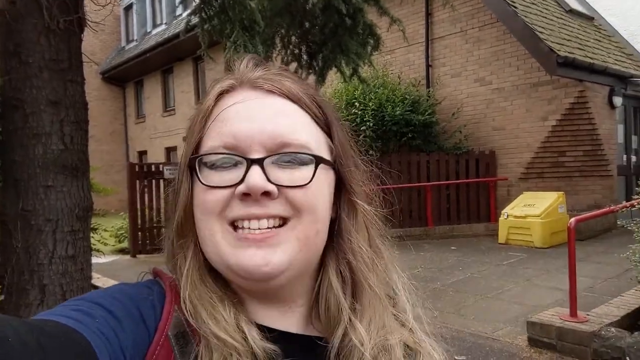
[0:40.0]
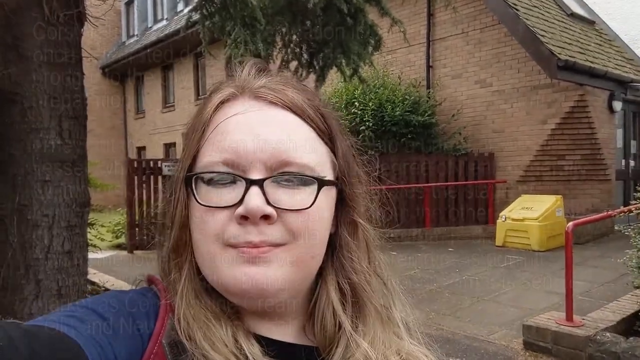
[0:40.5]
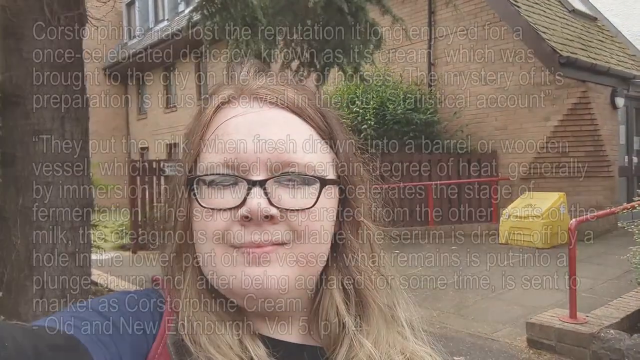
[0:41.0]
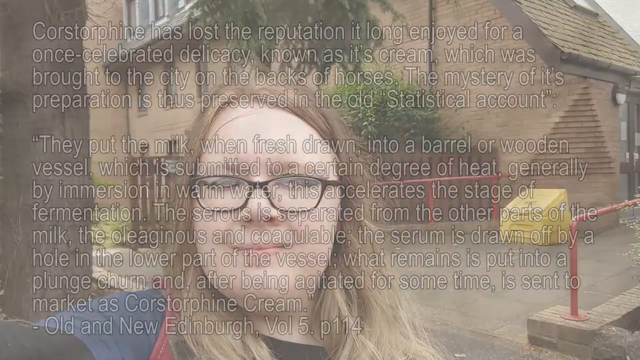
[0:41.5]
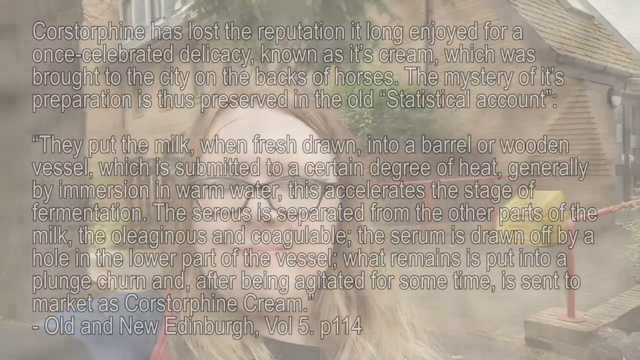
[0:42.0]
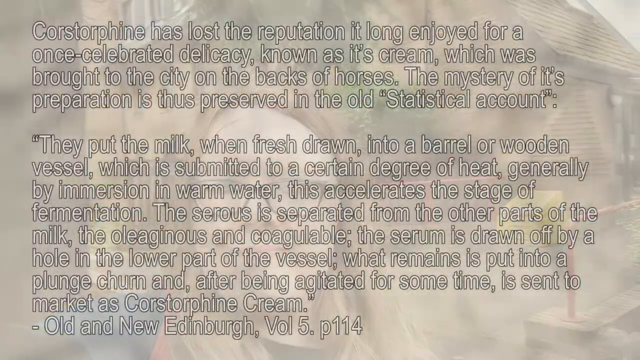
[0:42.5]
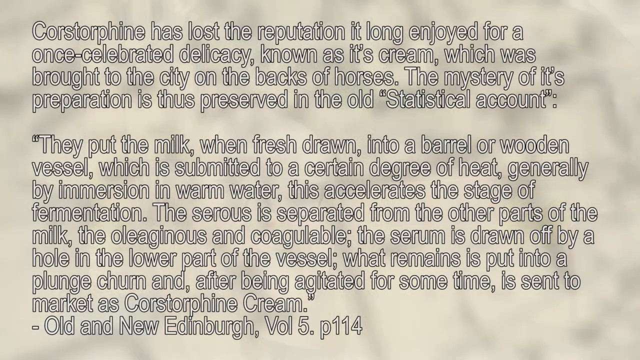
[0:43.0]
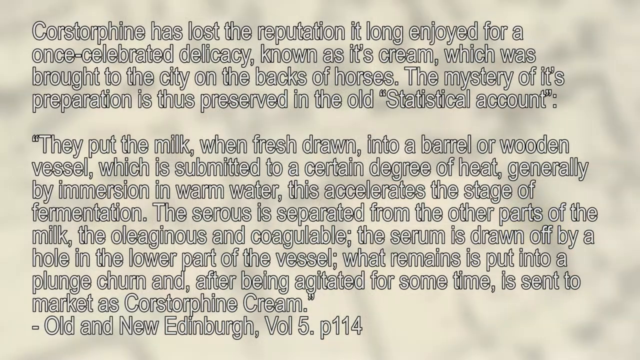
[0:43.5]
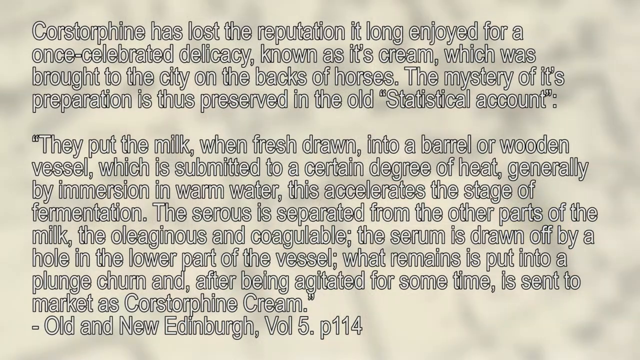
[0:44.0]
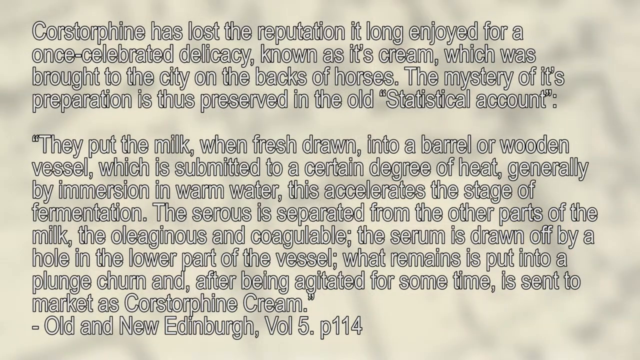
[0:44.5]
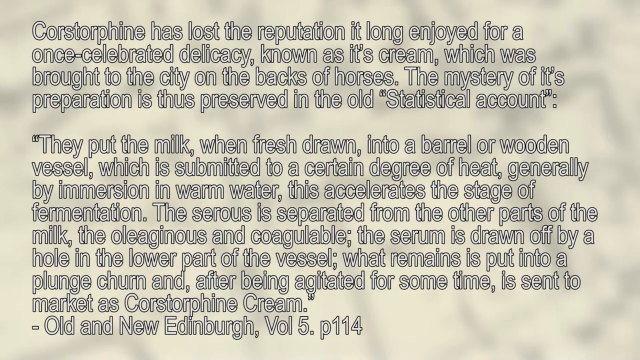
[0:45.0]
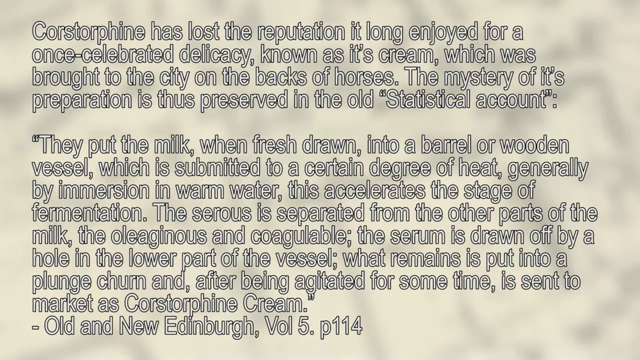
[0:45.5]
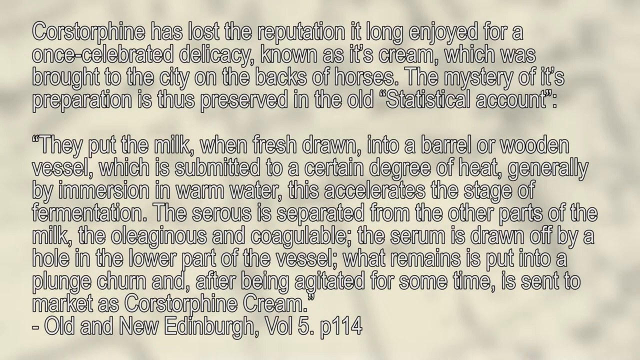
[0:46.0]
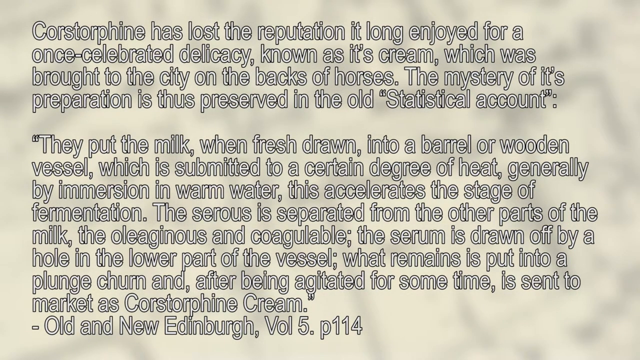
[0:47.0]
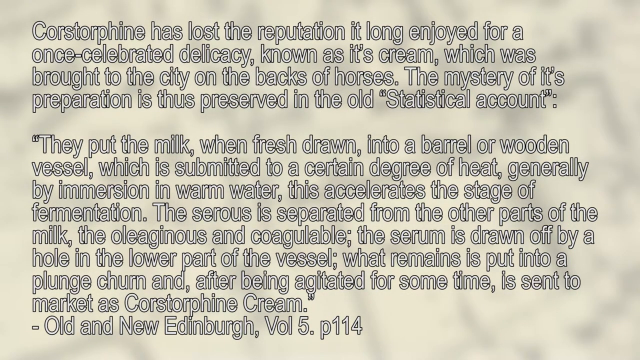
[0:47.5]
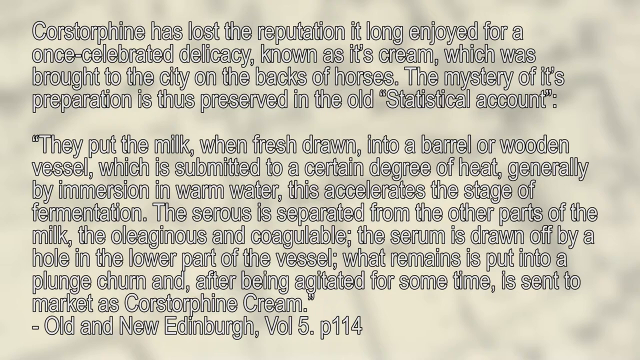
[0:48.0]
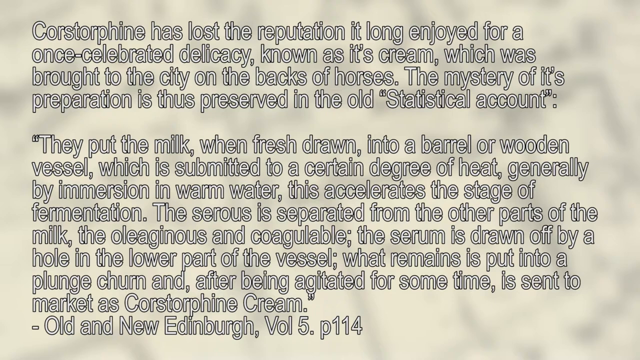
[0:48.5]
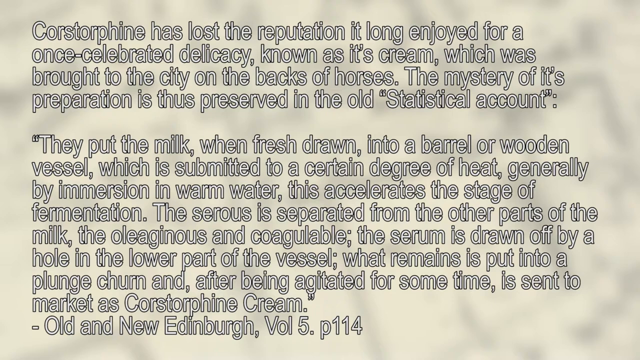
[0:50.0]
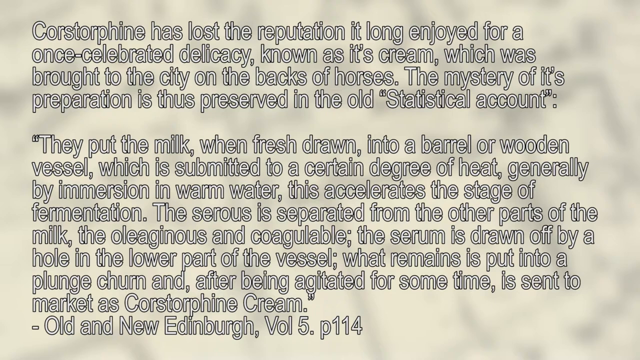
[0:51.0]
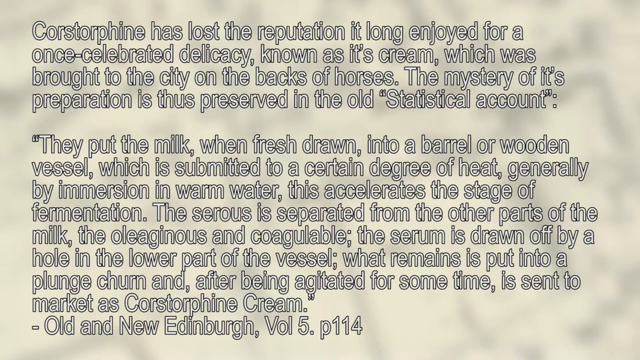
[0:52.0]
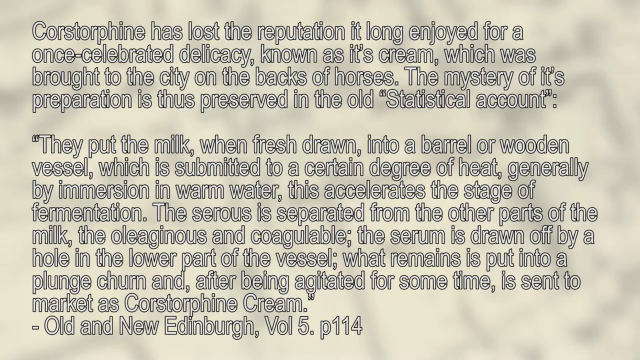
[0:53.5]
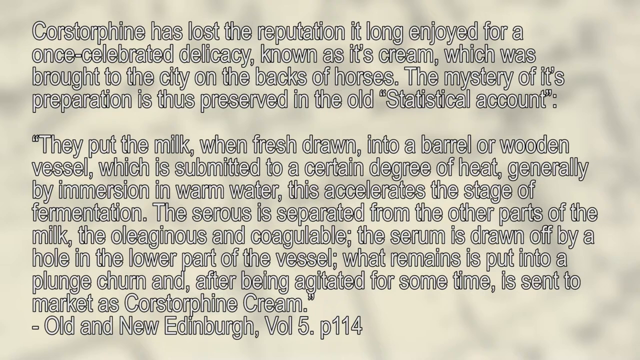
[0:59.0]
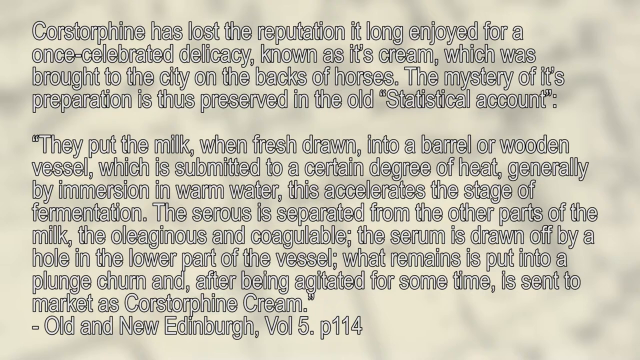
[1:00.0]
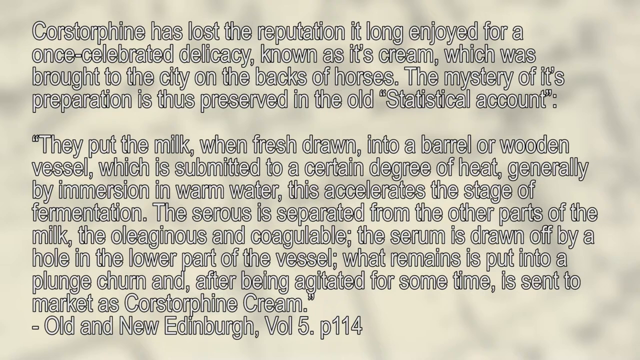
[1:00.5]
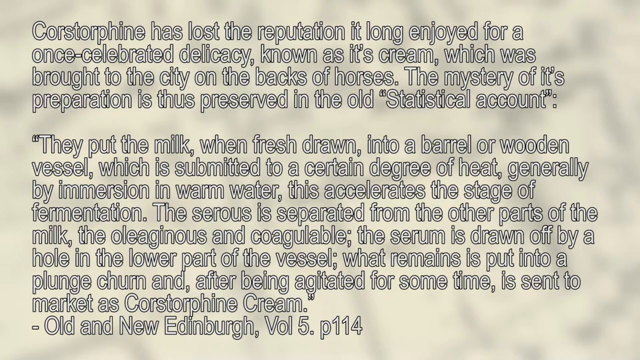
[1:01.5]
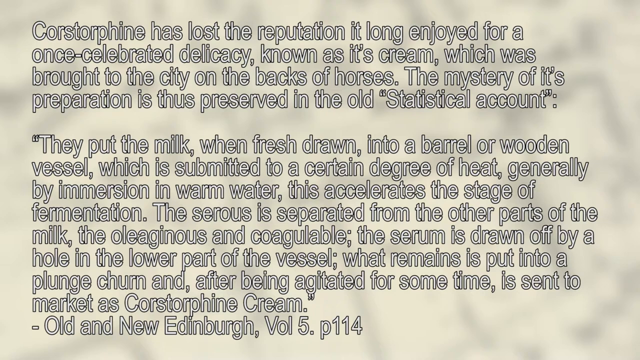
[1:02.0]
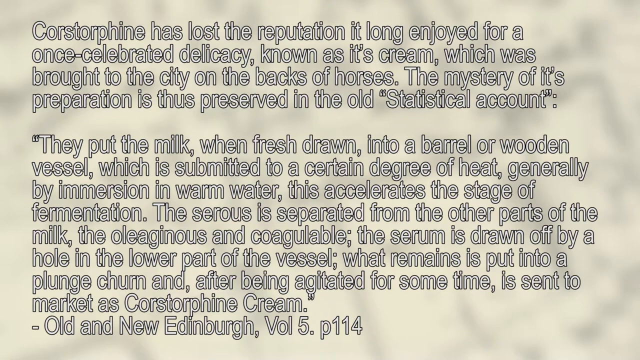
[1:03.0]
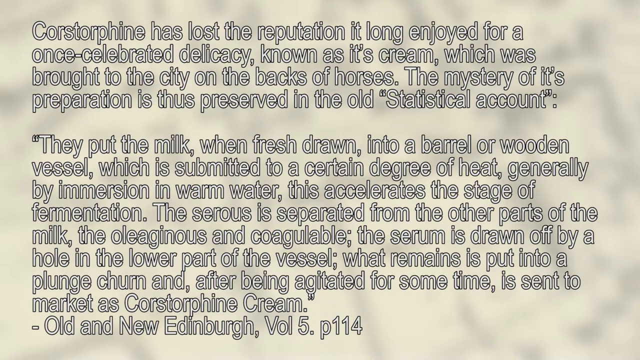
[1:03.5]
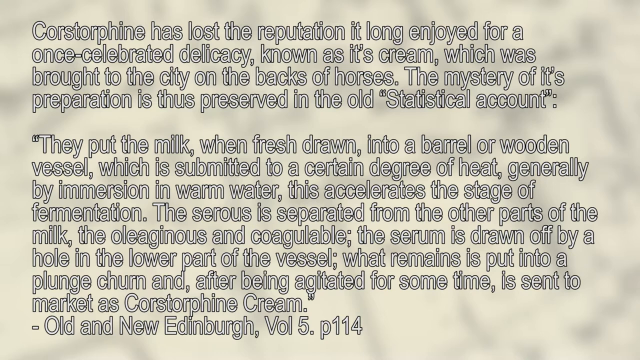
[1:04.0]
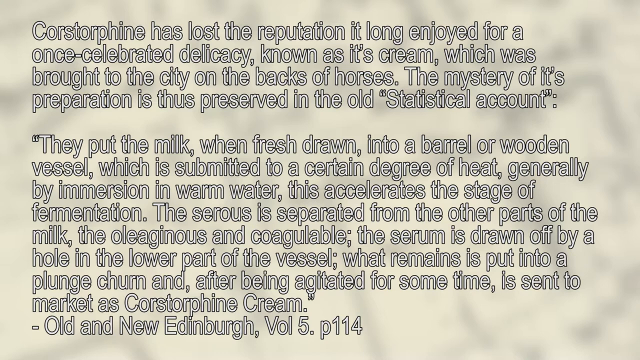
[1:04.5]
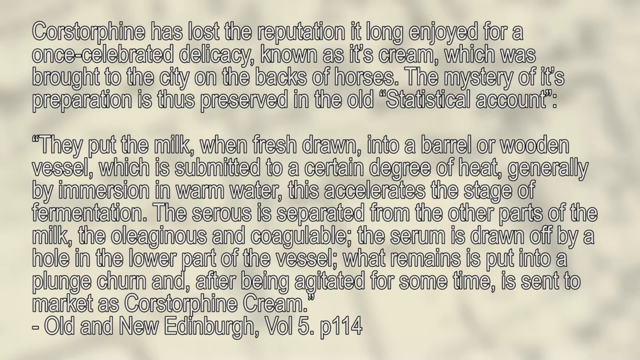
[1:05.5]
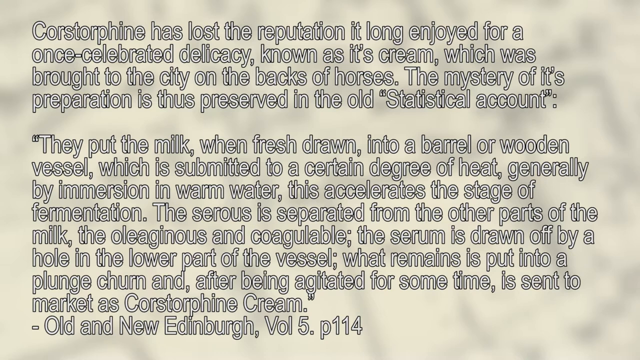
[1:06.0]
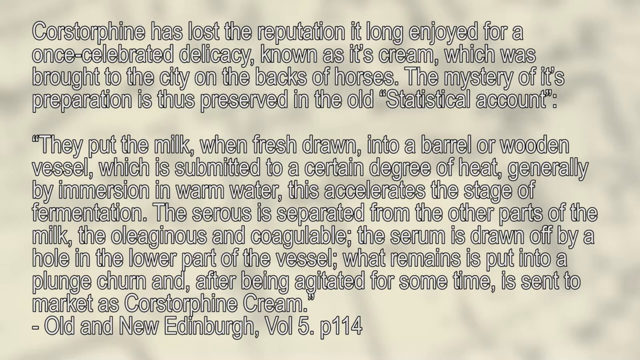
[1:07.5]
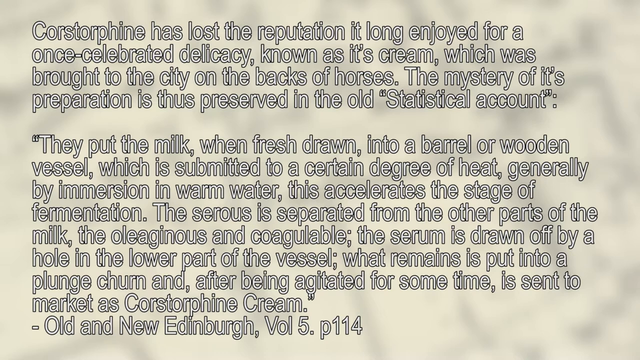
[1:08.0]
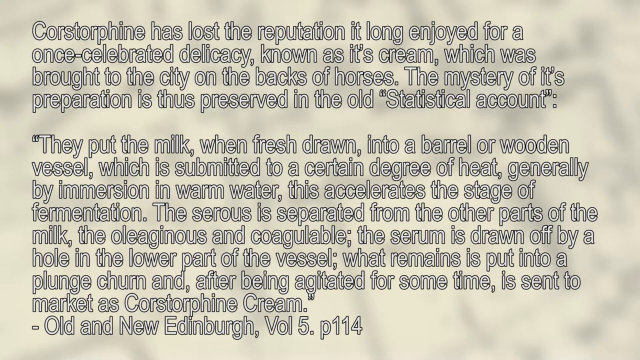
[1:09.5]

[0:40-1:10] The woman's video selfie gives way to a quotation from volume five, page 114 of Old and New Edinburgh. It reads: "Corstorphine has lost the reputation it long enjoyed for a once-celebrated delicacy, known as its cream, which was brought to the city on the backs of horses. The mystery of its preparation is thus preserved in the old statistical account." The quoted passage continues: "they put the milk when fresh drawn into a barrel or wooden vessel, which is submitted to a certain degree of heat, generally by immersion in warm water. This accelerates the stage of fermentation." It also includes "The serum is drawn off by a hole in the lower part of the vessel. What remains is put into a plunge churn and after being agitated for some time is sent to the market as Corstorphine cream."